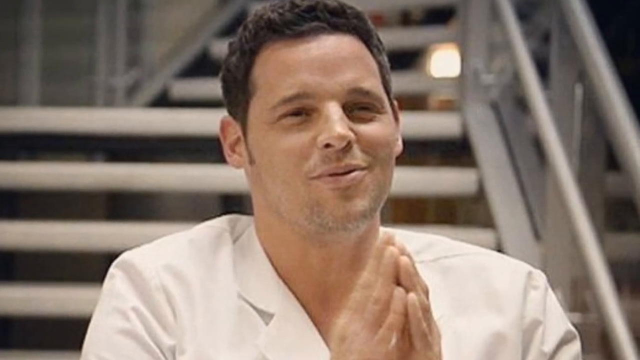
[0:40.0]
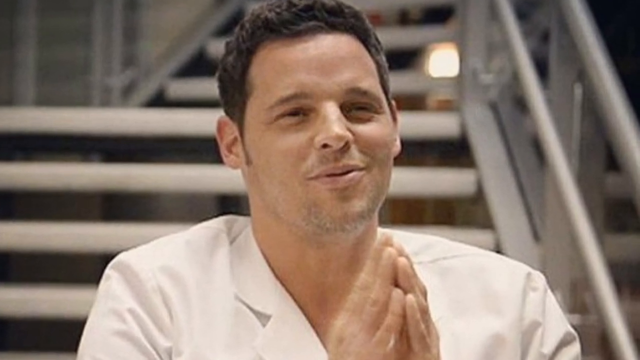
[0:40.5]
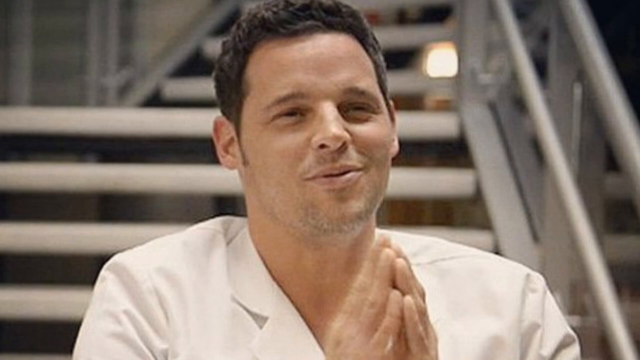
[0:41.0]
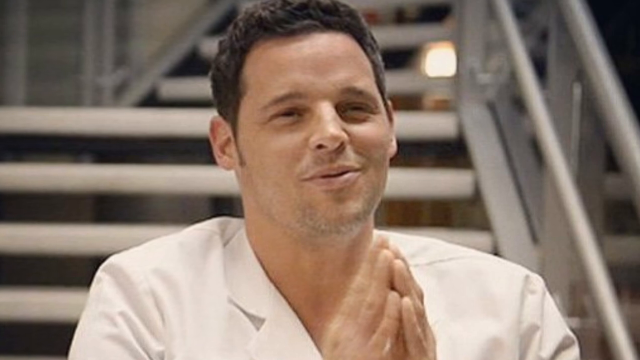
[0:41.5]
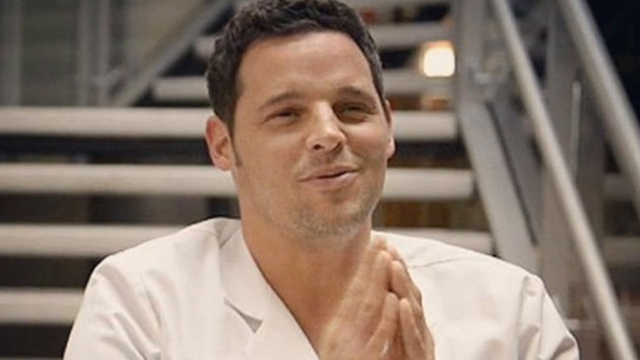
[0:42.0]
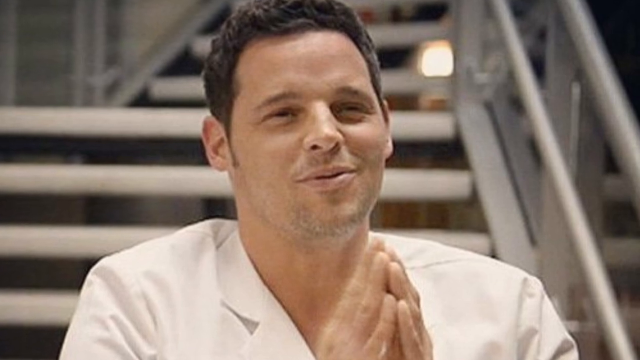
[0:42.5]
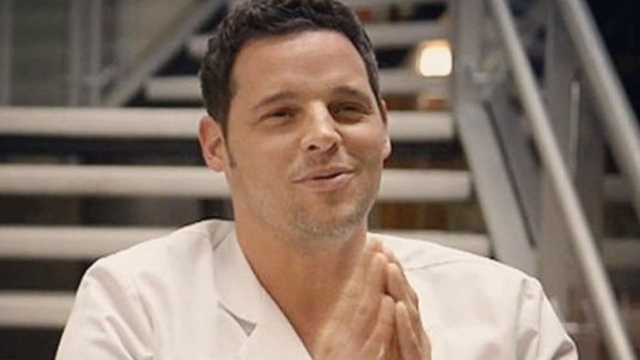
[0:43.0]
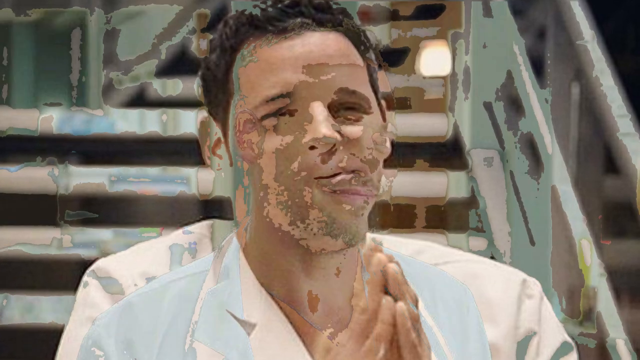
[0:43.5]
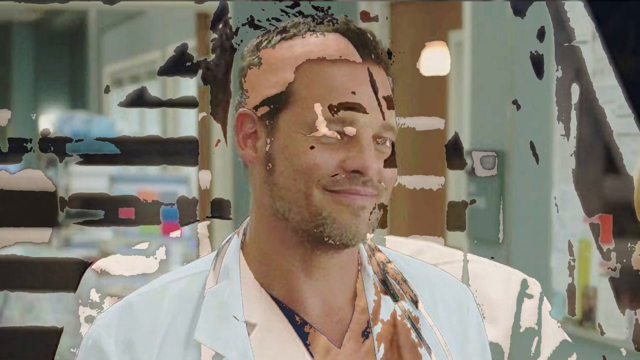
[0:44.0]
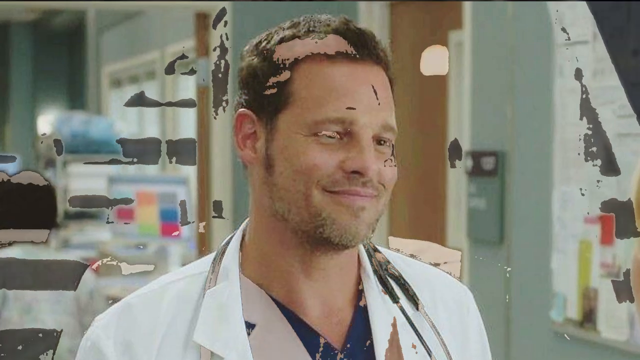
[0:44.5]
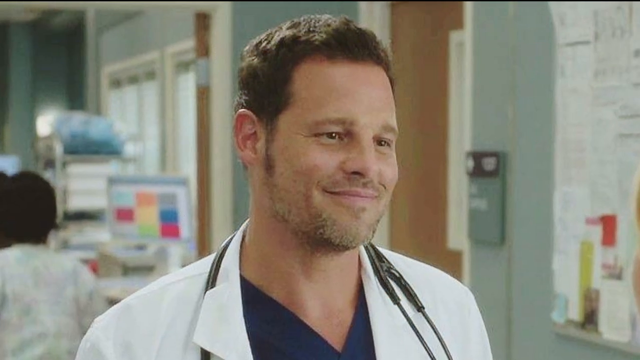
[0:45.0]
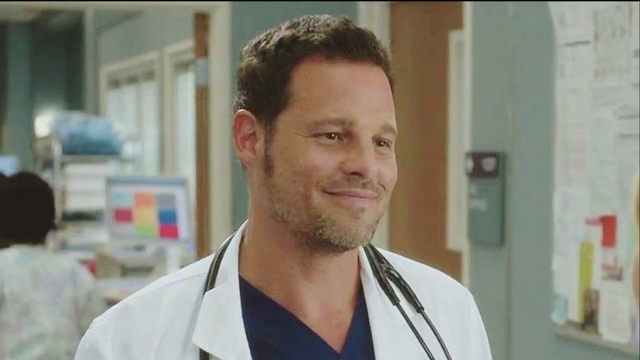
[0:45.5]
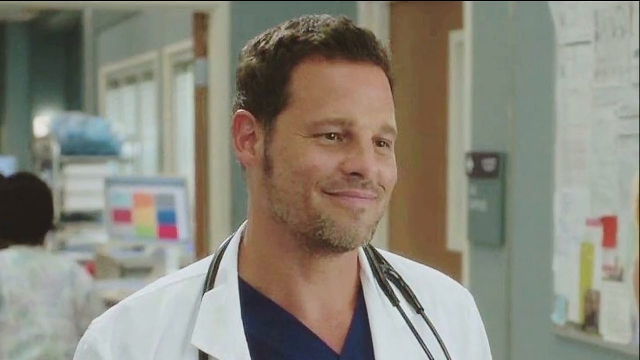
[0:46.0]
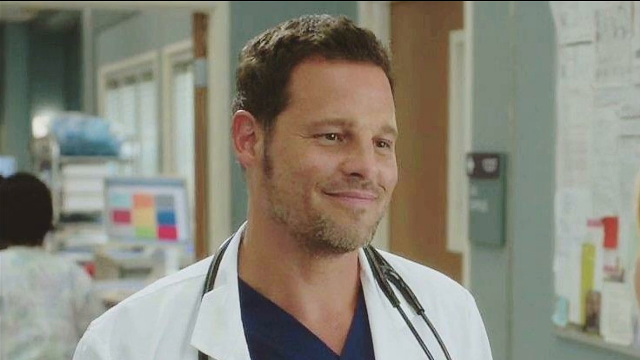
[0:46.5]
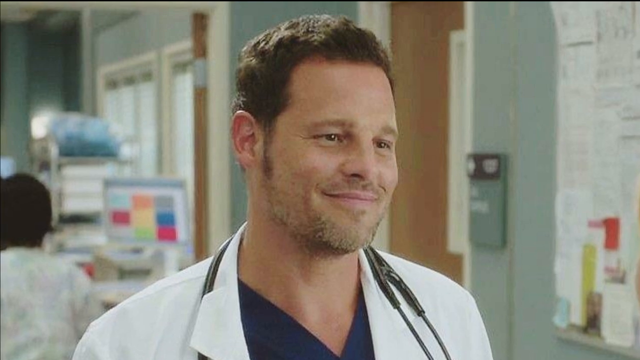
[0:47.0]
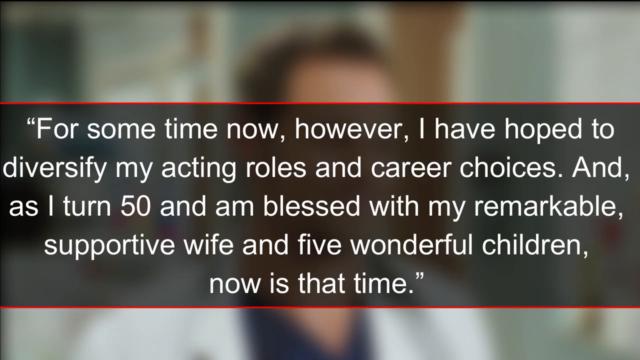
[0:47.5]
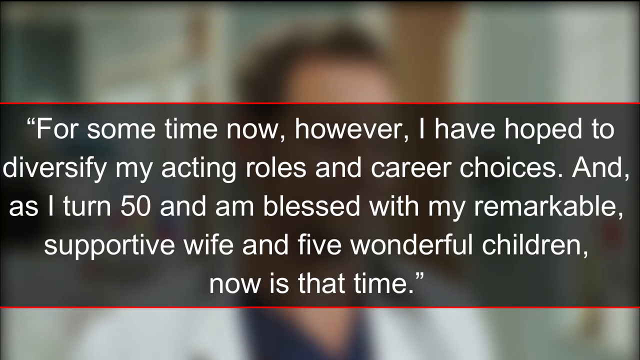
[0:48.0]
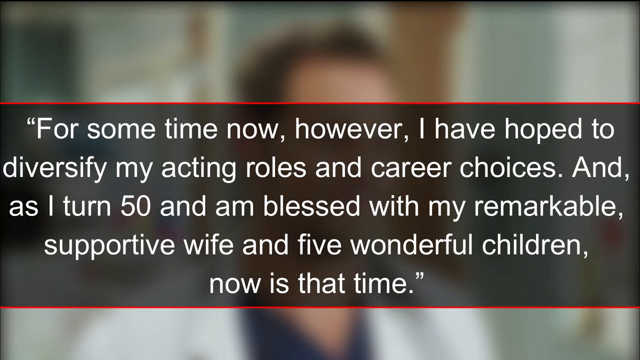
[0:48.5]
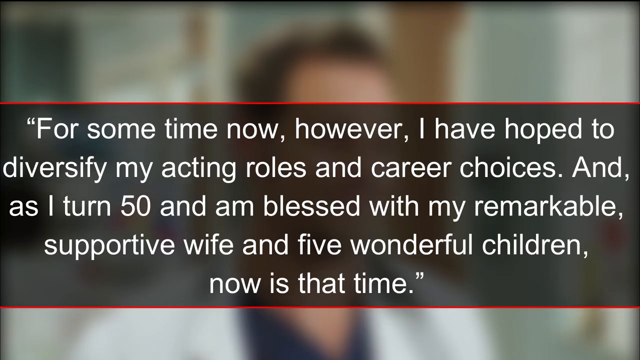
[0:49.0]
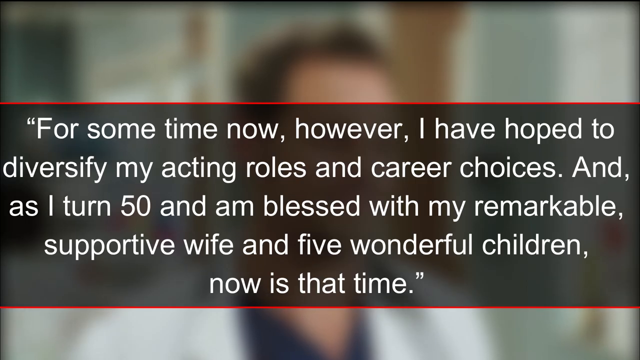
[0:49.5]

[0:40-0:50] A picture shows a white man sitting on gray steel stairs, seen only from the chest upward. He has short brown hair and his hands together with his fingertips touching, and he wears a white lab coat with a white shirt. His lips are puckered a little and he is looking over to the right of the screen. It is a still image, and the camera pans to the upper right. The video switches to another image of the same man, with short brown hair, scruff that is not graying as much, brown eyes and a bit of a smirk. He wears a lab coat with blue scrubs and has a stethoscope around his neck. The background is a medical setting, a hospital, with monitors and carts of medical supplies, and a doorway into a room with a sign on the front of it and papers taped to a wall. Text then appears on the screen: "for some time now, however, I have hoped to diversify my acting roles and career choices and as I turn 50 and am blessed with my remarkable supportive wife and five wonderful children, now is that time."